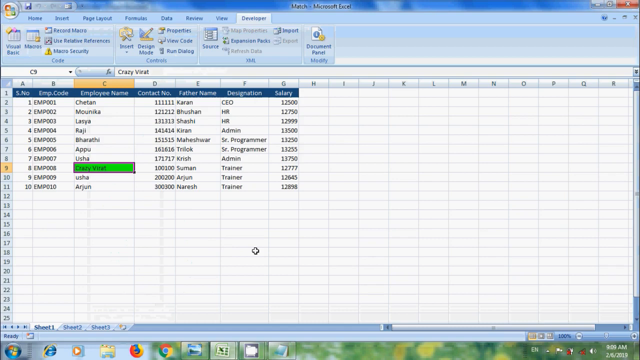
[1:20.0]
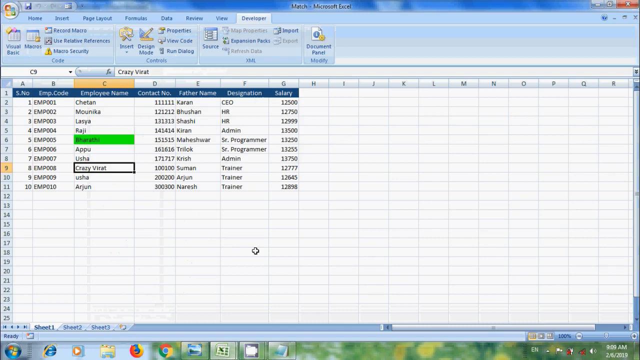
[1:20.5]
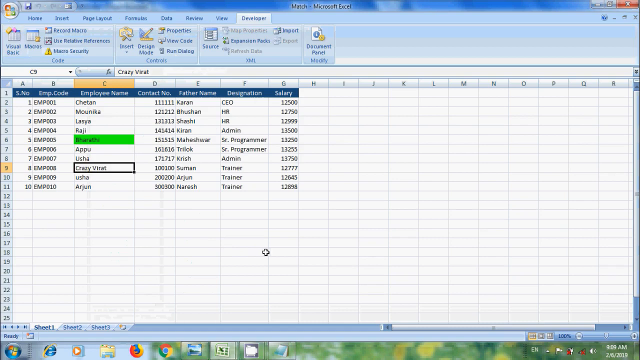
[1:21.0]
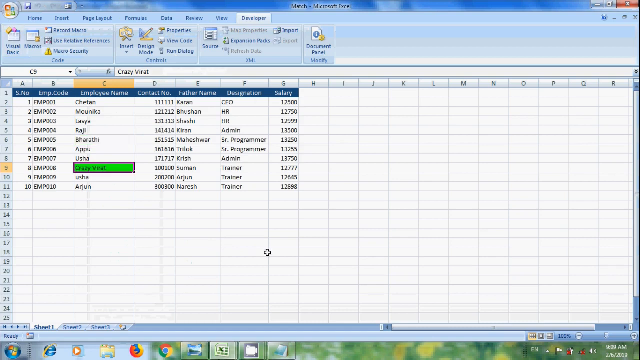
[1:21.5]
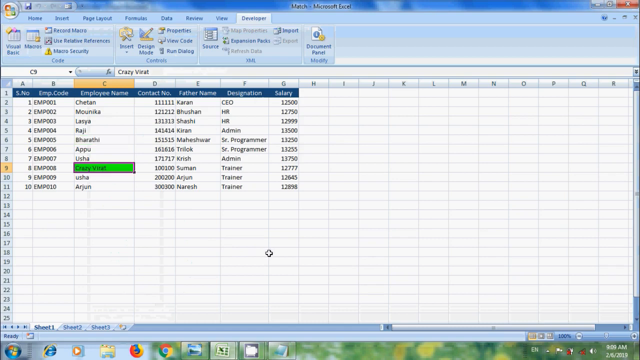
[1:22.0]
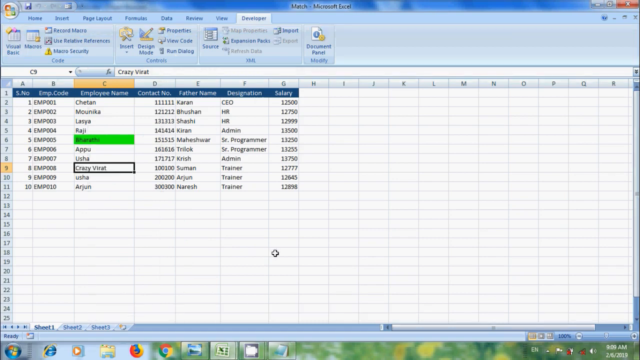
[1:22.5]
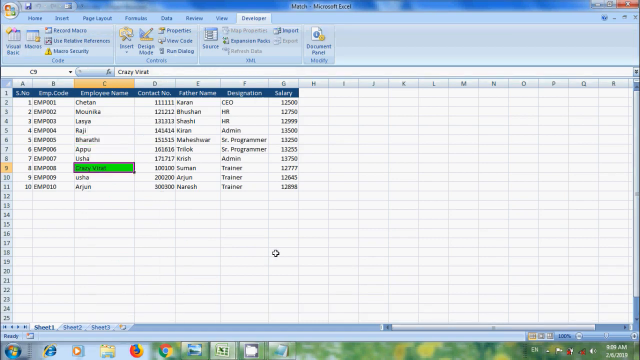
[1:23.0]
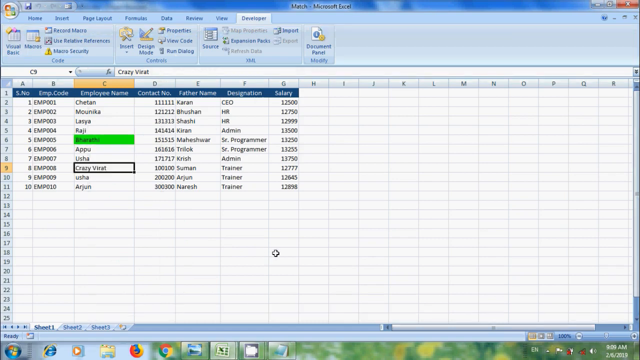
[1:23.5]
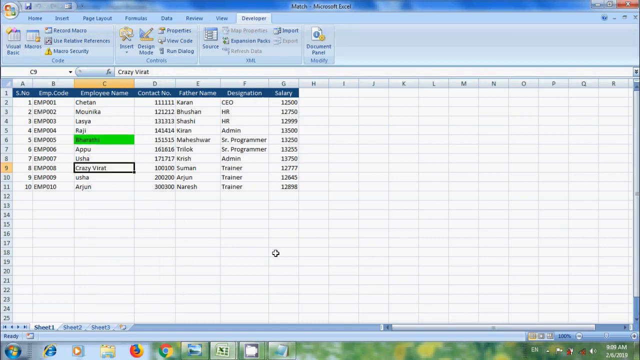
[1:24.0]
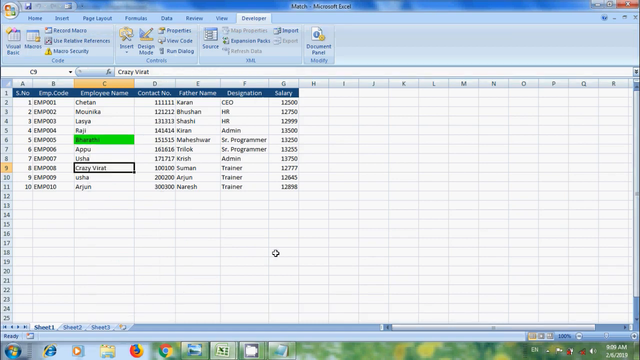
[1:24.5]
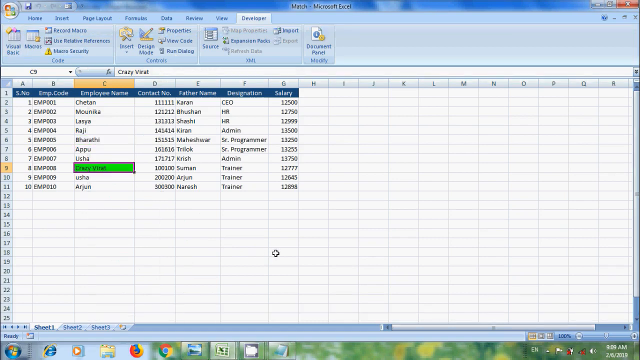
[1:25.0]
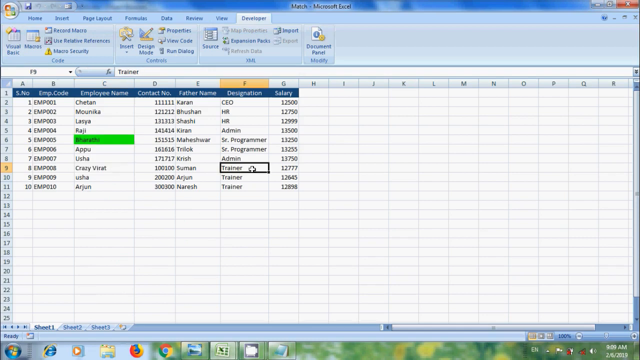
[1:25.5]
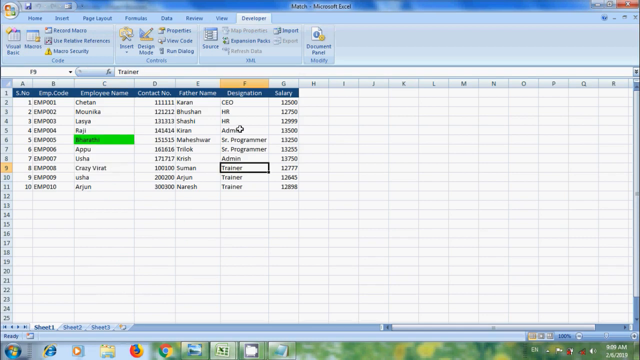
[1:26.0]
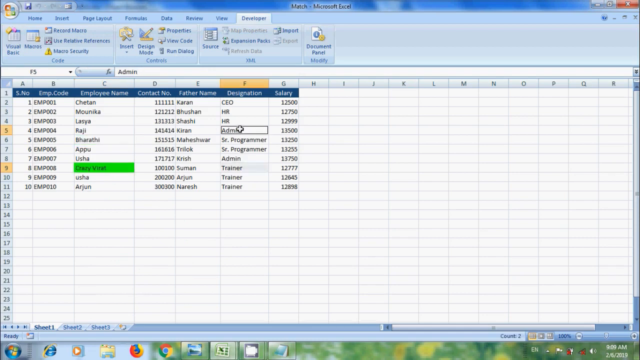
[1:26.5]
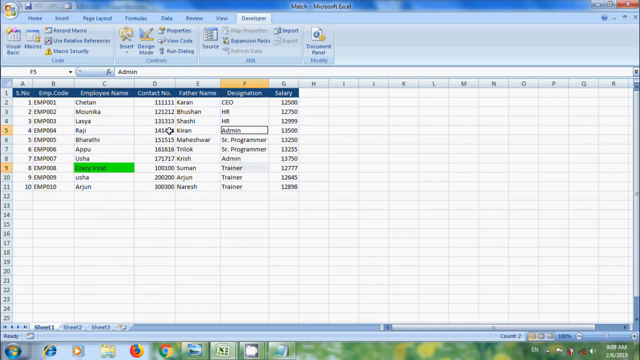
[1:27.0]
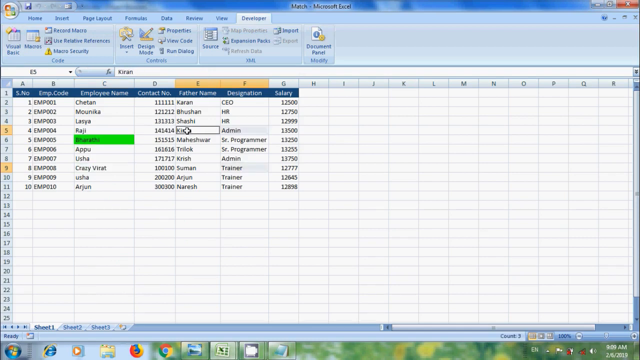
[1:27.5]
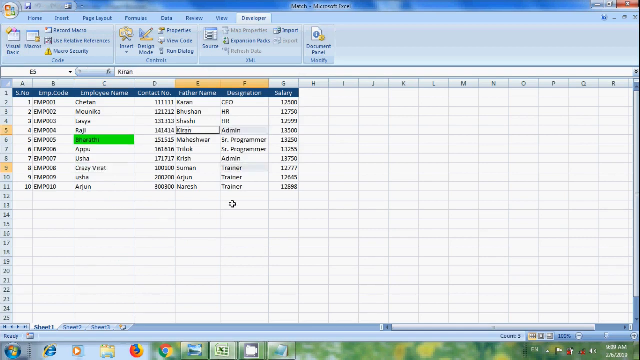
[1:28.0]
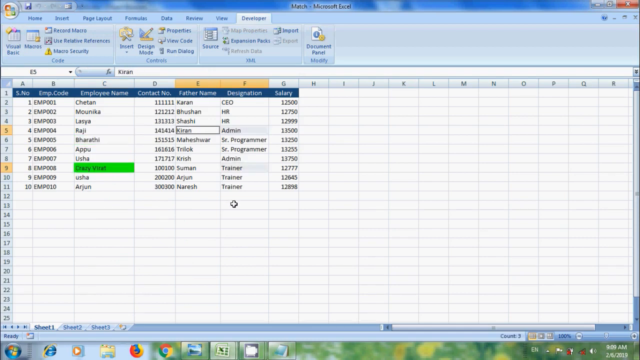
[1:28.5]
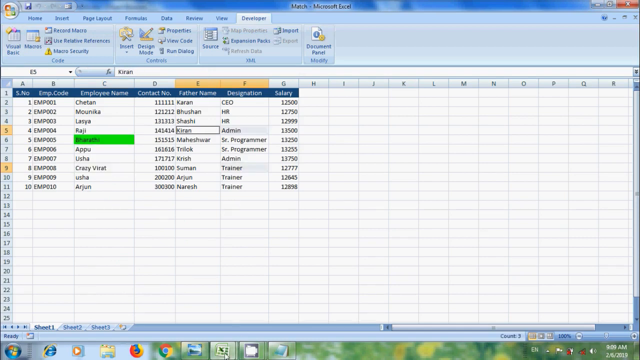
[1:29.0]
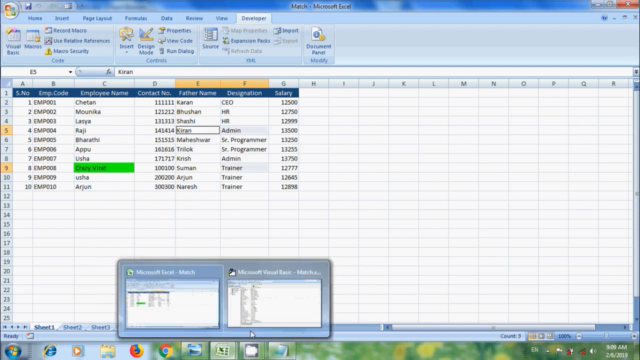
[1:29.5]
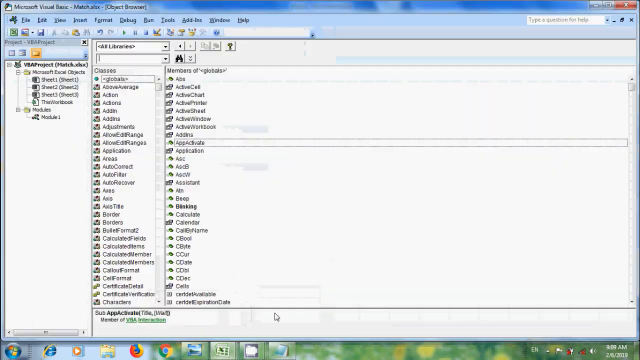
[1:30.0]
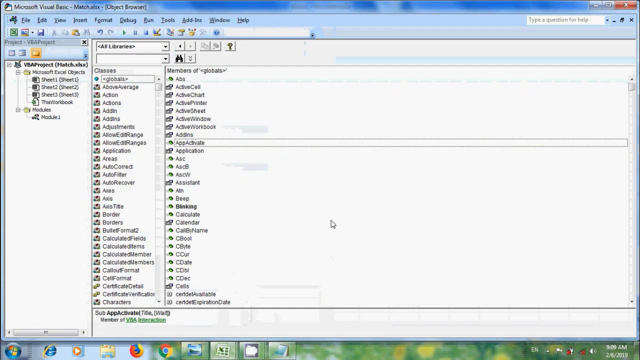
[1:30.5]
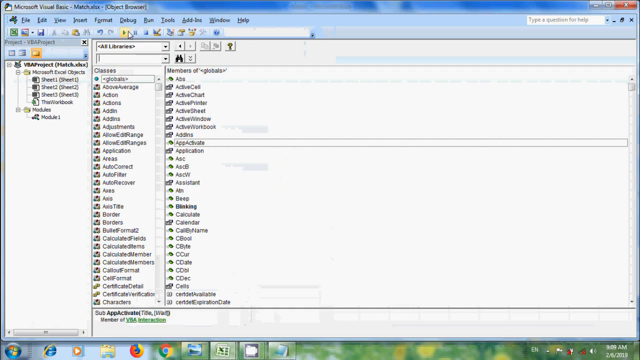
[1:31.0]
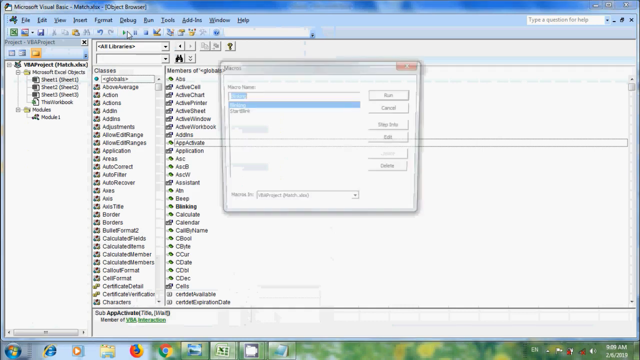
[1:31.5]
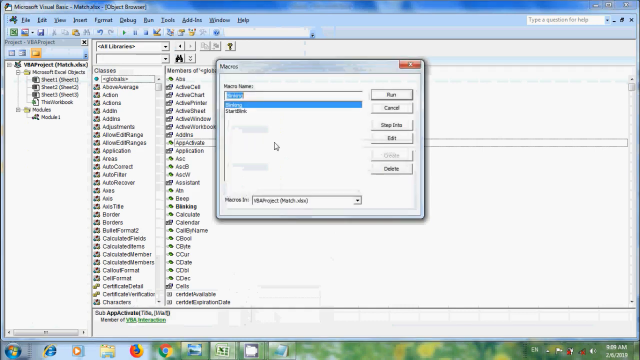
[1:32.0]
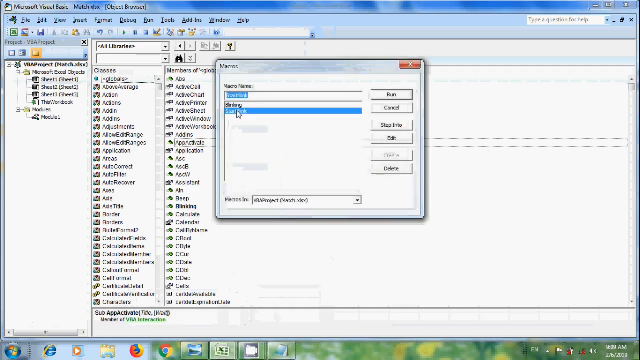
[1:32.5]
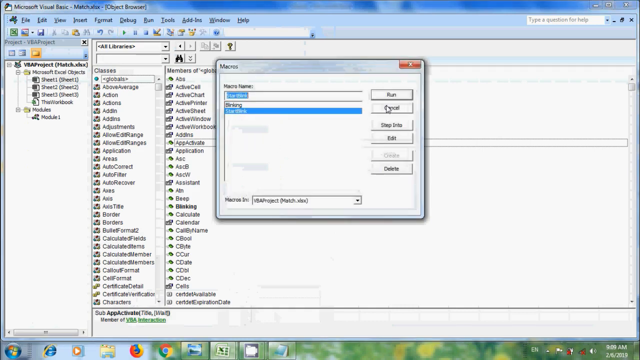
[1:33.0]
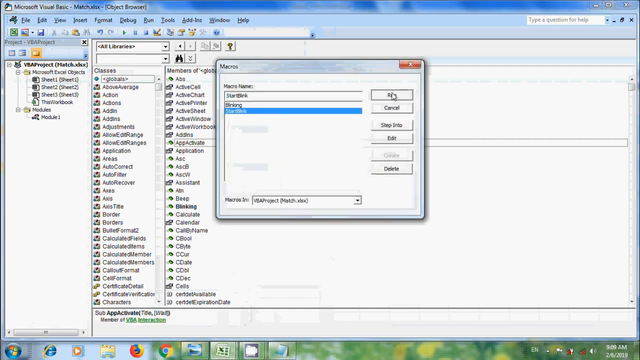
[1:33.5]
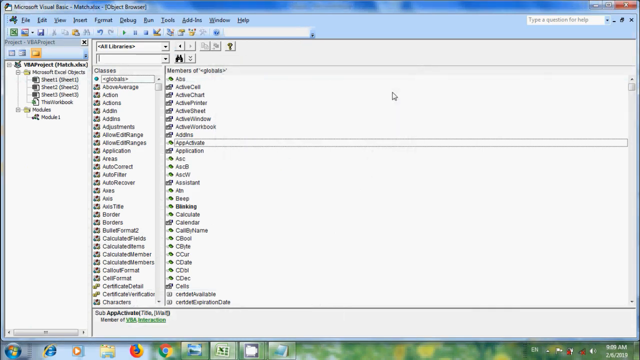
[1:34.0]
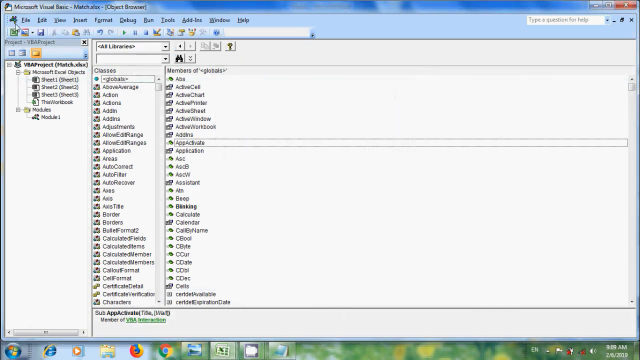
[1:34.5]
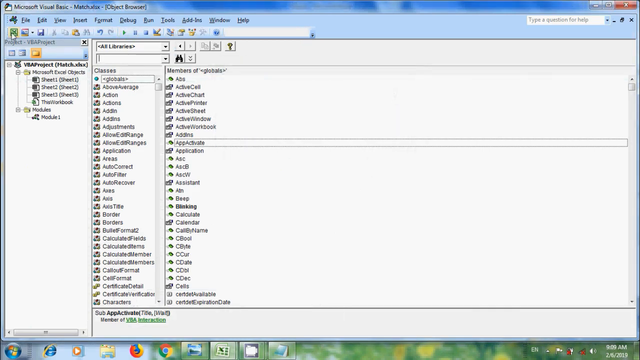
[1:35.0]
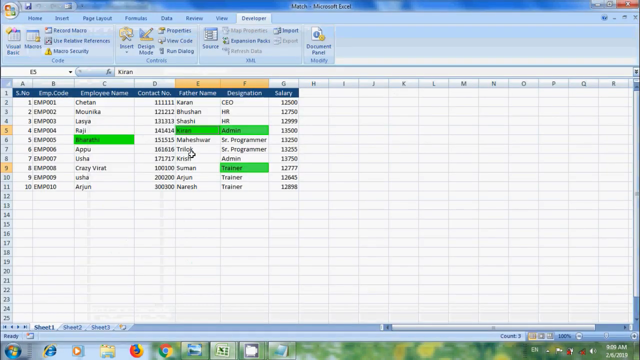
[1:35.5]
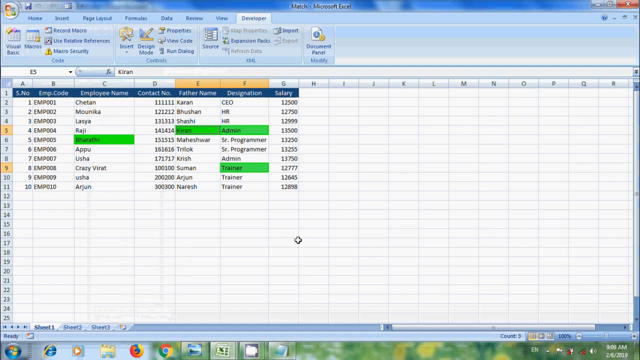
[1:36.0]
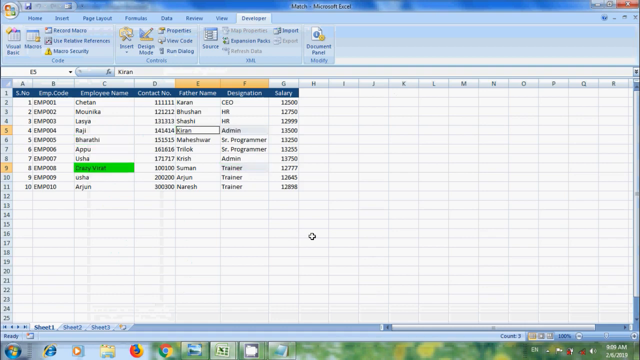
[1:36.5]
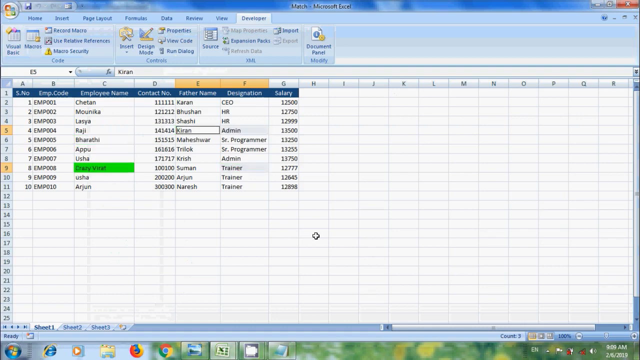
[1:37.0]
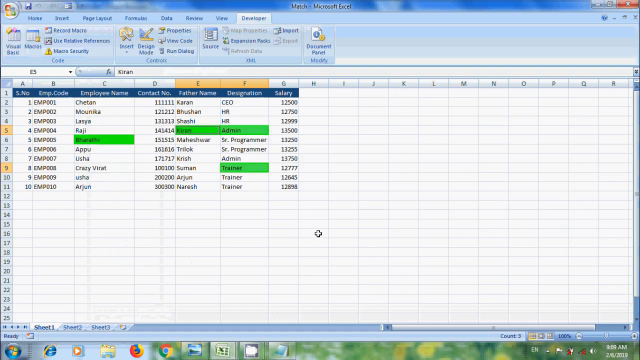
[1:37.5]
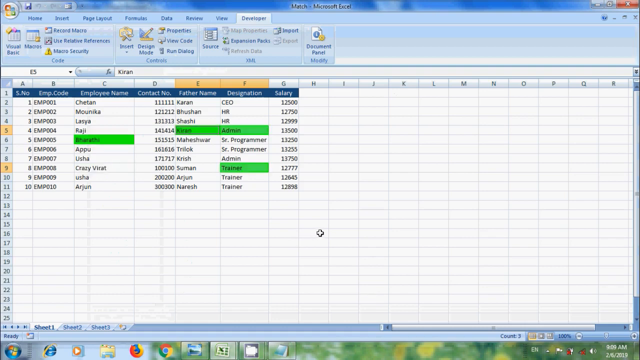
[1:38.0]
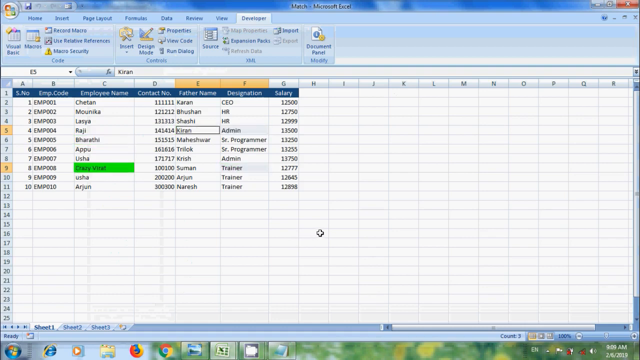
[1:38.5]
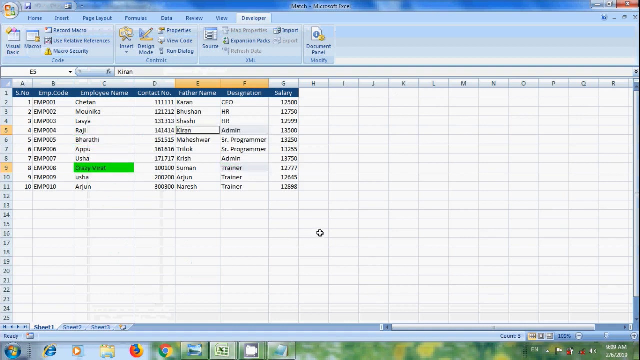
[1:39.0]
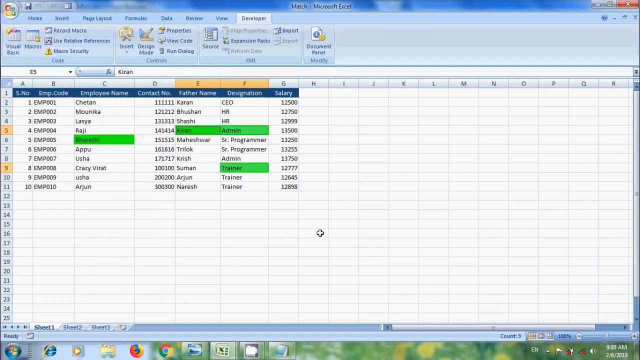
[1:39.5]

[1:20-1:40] Microsoft Excel is shown with the columns that were made, followed by navigation to Microsoft Visual Basic and the selection of specific commands. The sheet has a plain white background with the headings employee code, employee name, contact number, father name, designation and salary. This is Sheet 1, and there are also Sheet 2 and Sheet 3.